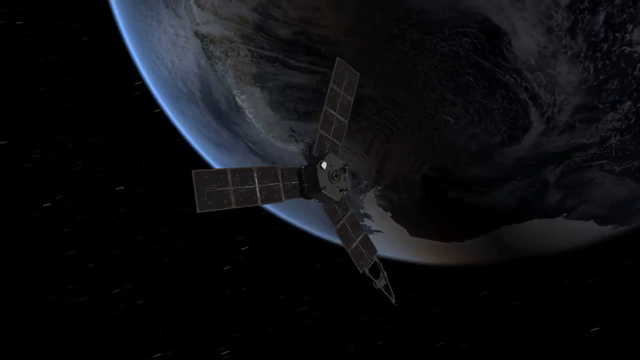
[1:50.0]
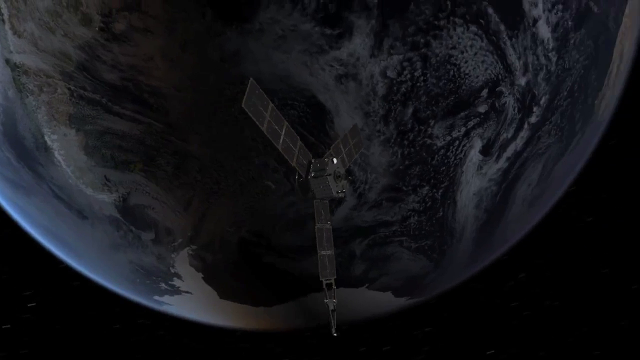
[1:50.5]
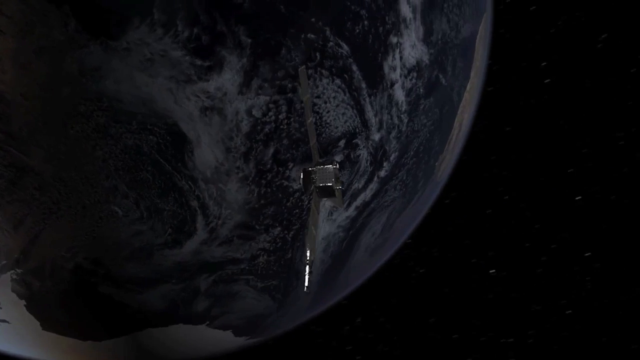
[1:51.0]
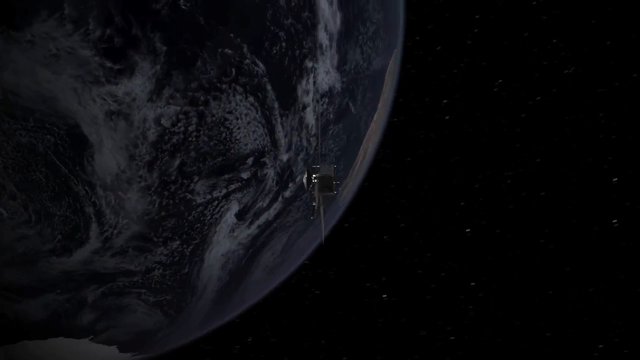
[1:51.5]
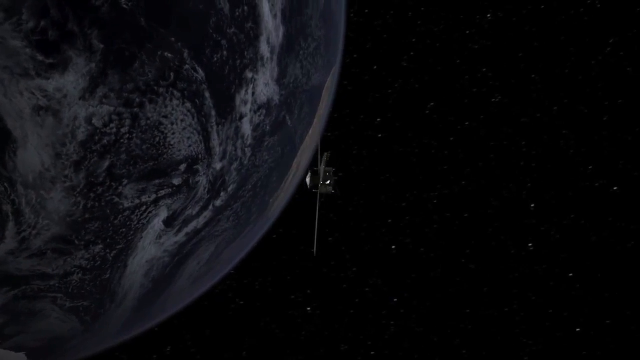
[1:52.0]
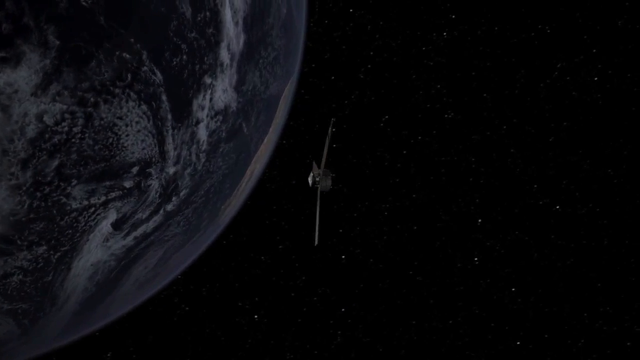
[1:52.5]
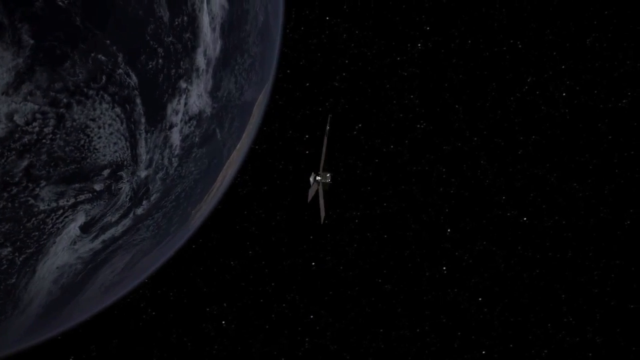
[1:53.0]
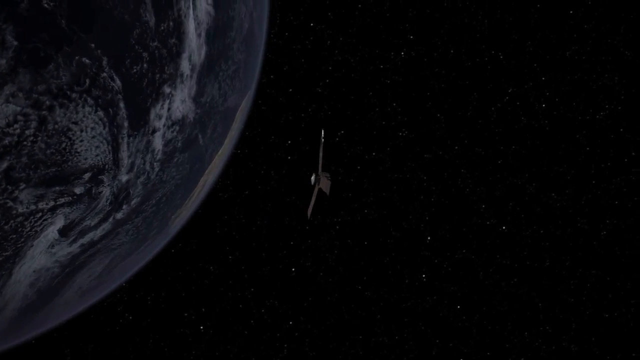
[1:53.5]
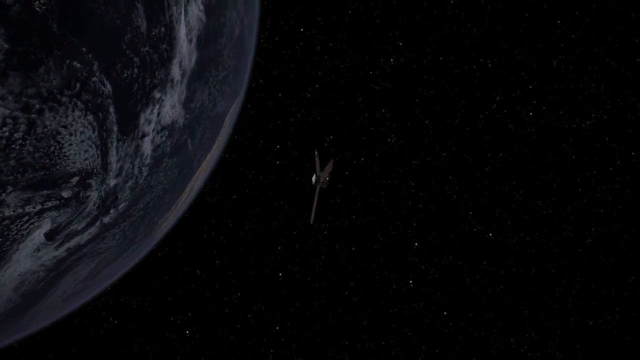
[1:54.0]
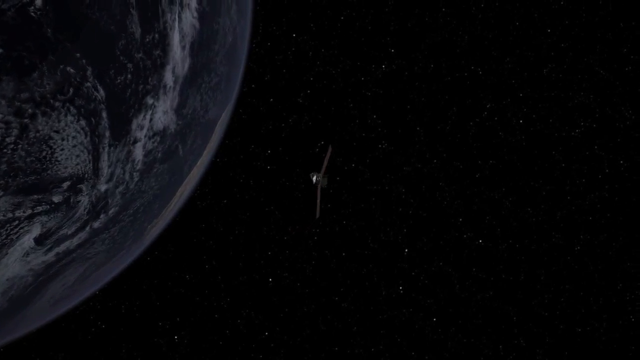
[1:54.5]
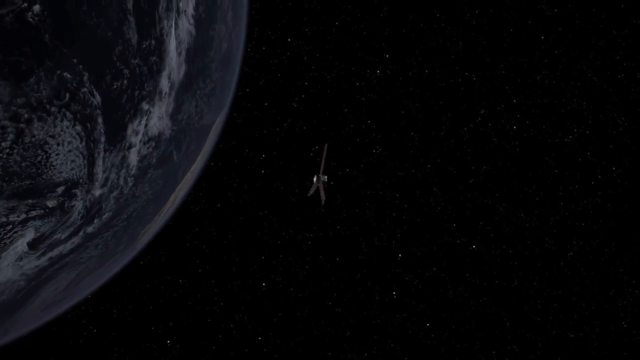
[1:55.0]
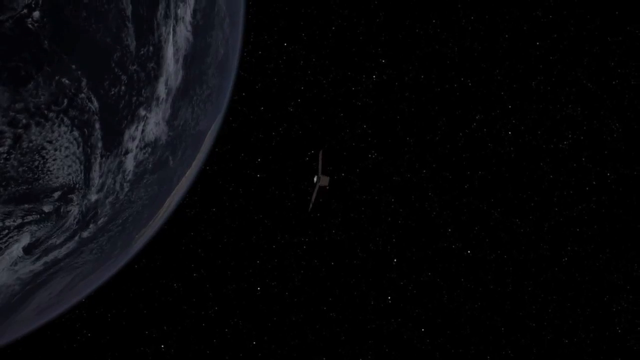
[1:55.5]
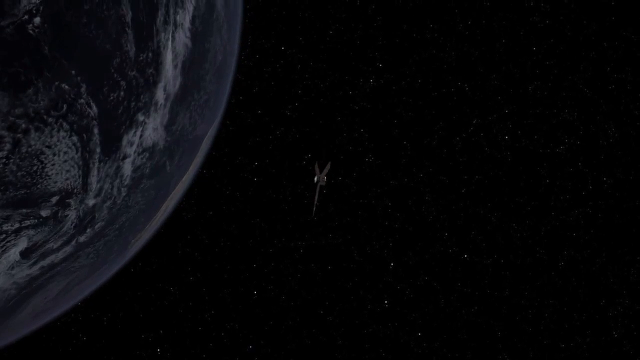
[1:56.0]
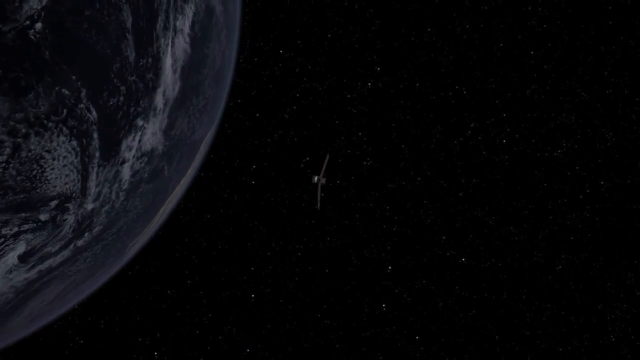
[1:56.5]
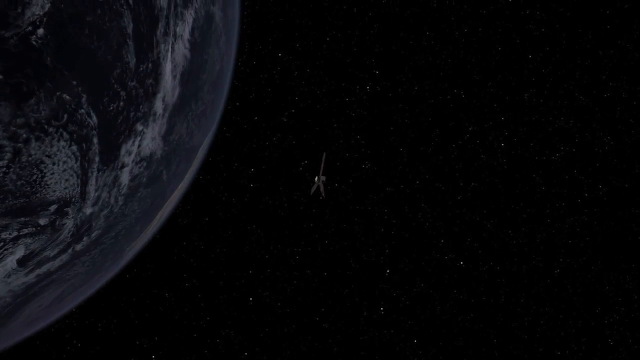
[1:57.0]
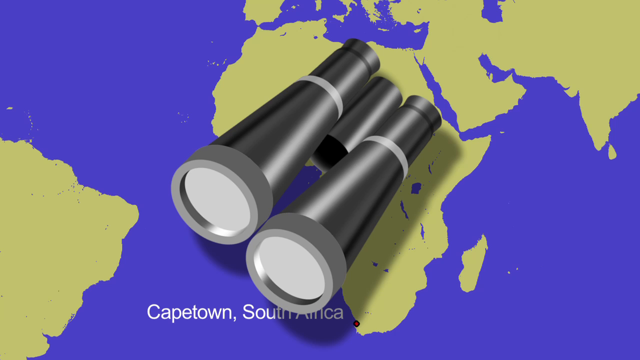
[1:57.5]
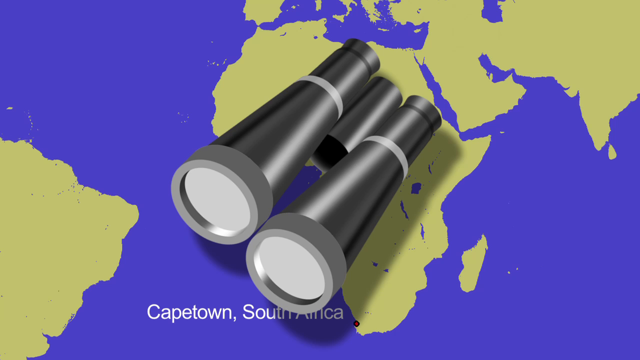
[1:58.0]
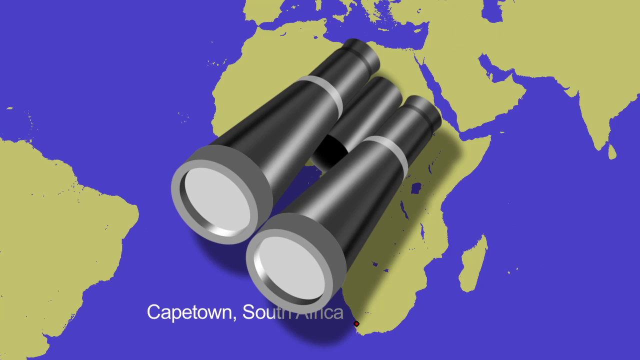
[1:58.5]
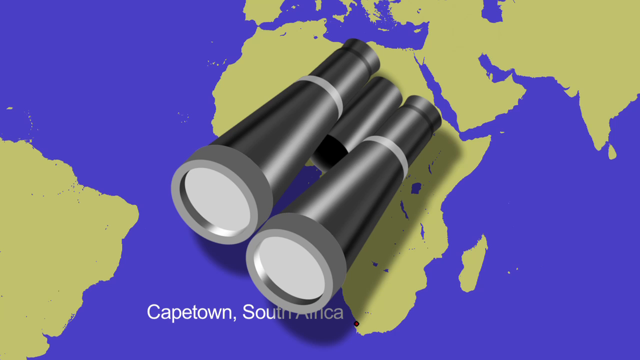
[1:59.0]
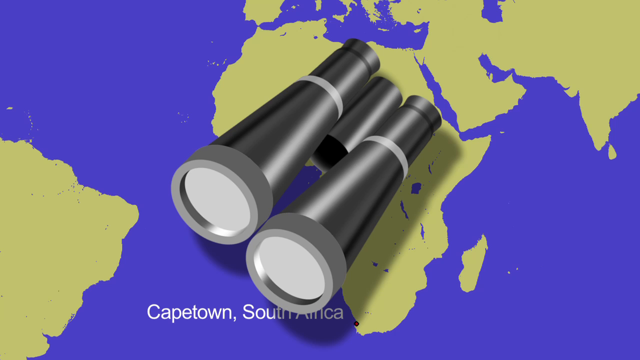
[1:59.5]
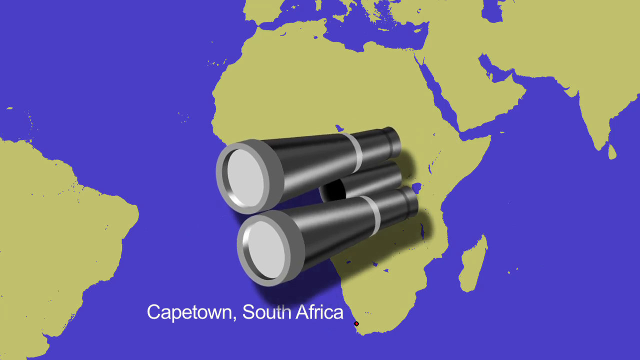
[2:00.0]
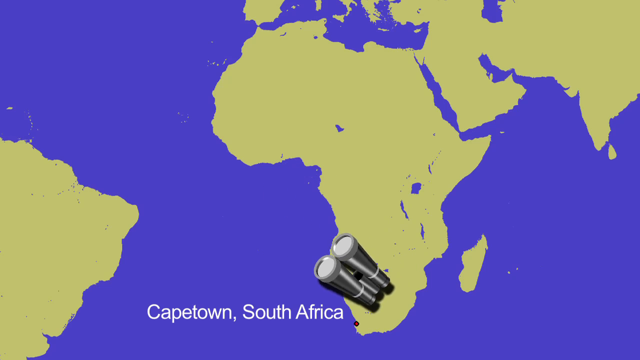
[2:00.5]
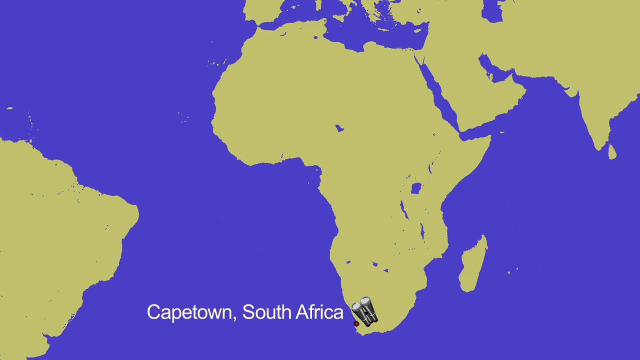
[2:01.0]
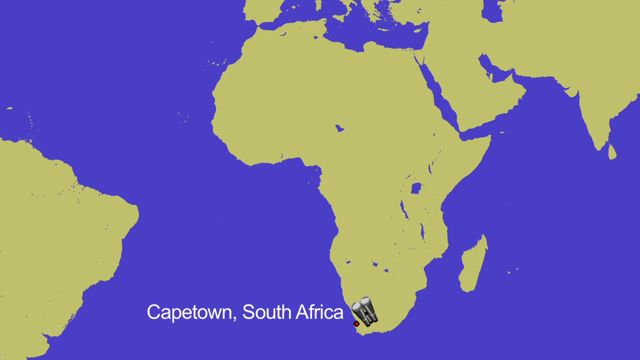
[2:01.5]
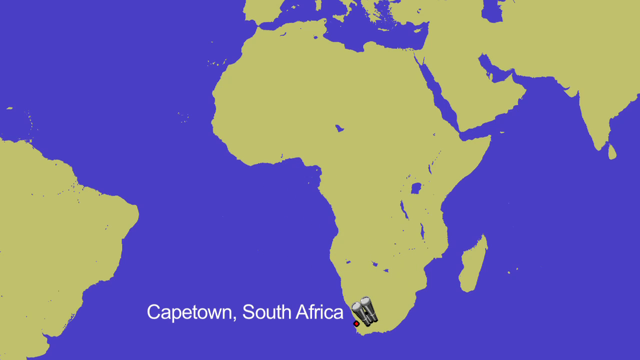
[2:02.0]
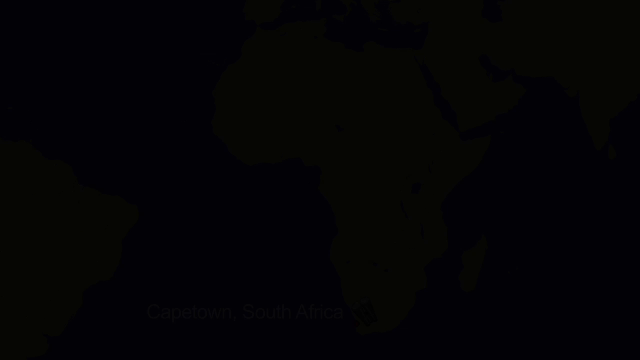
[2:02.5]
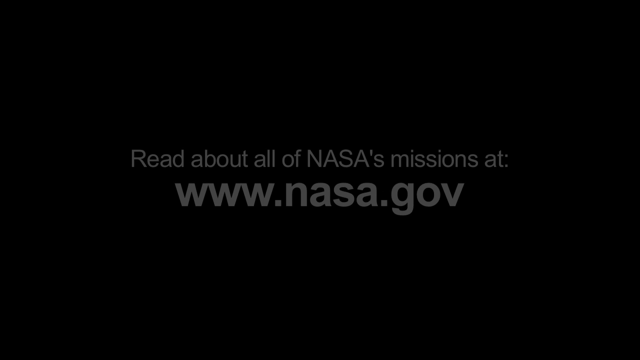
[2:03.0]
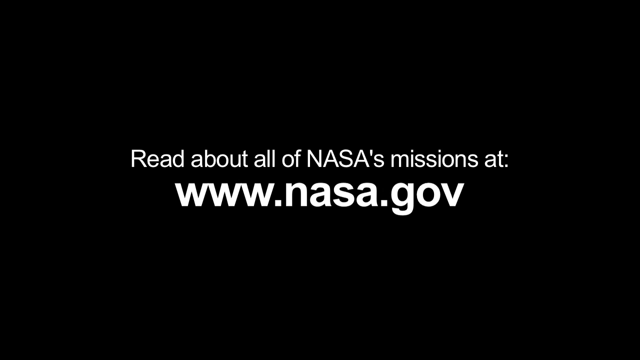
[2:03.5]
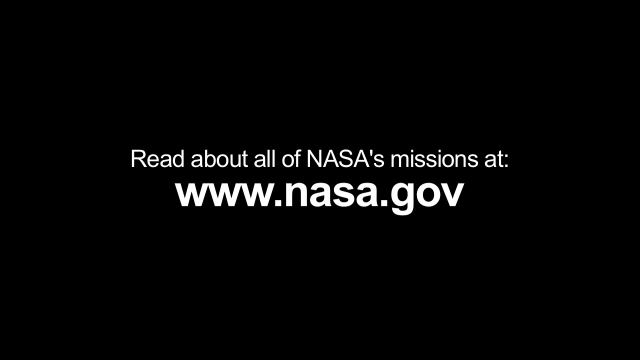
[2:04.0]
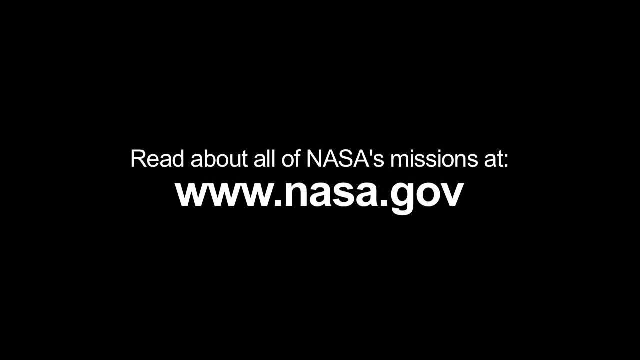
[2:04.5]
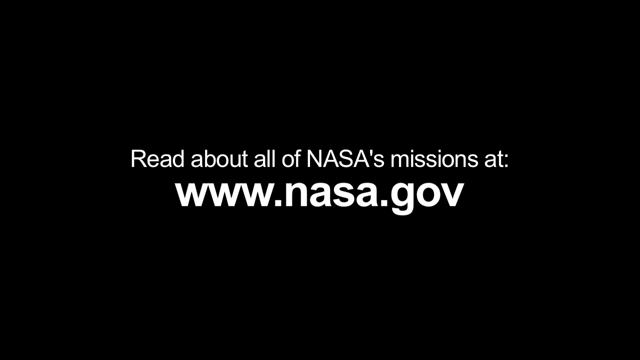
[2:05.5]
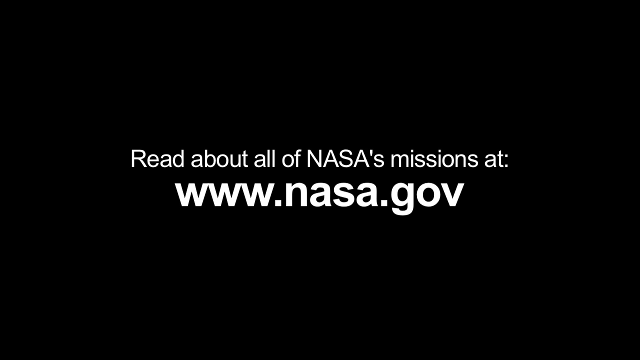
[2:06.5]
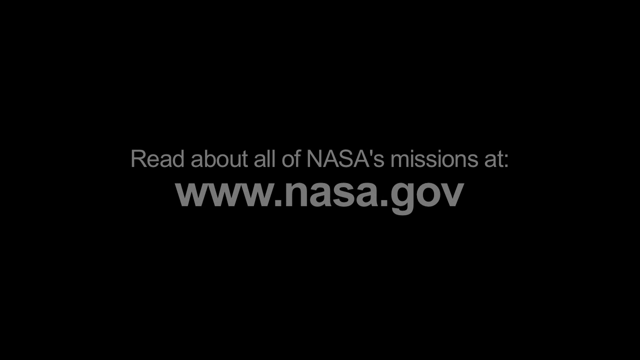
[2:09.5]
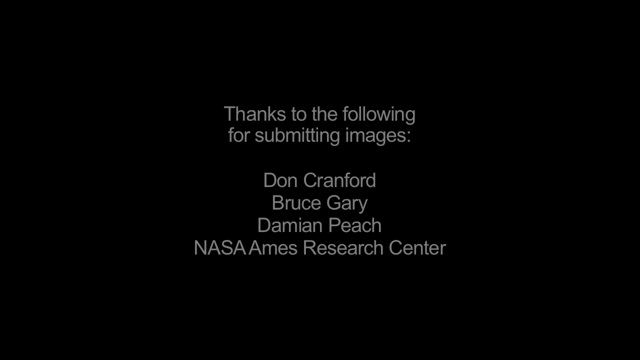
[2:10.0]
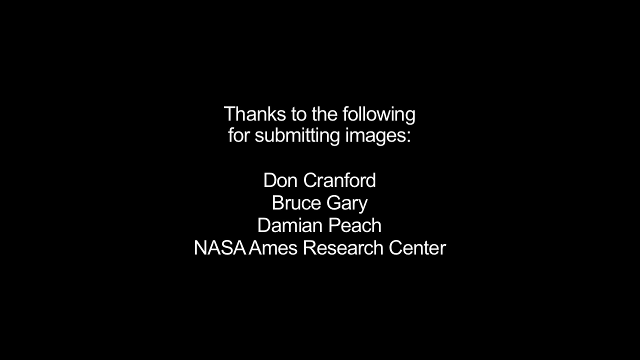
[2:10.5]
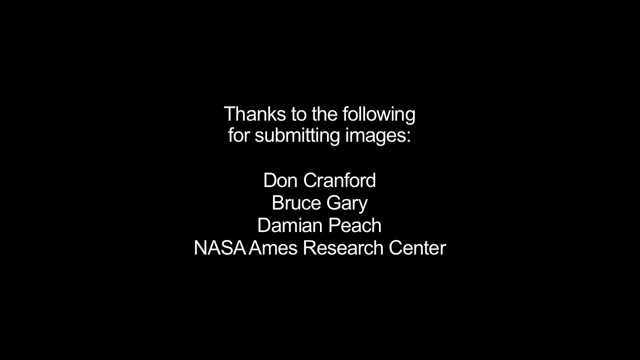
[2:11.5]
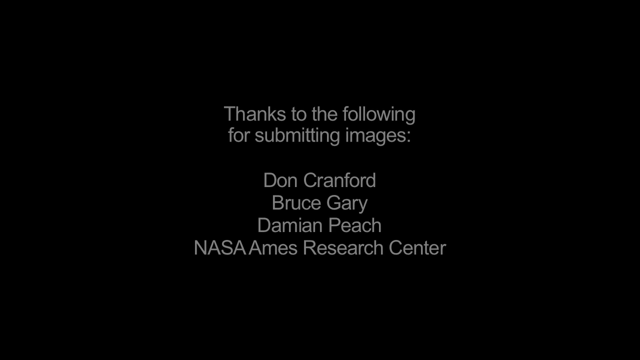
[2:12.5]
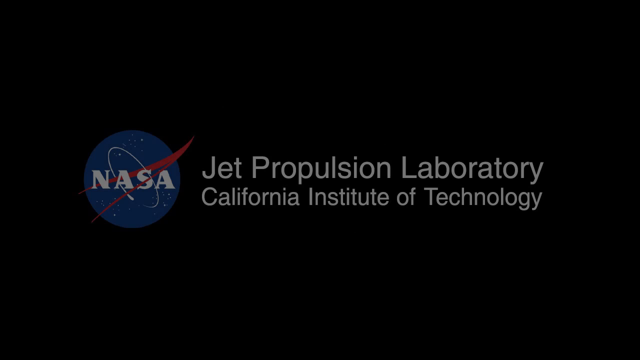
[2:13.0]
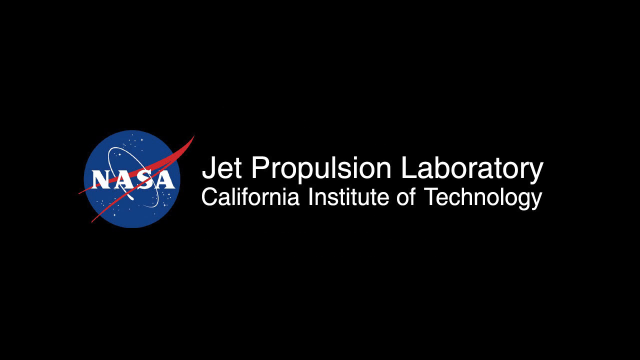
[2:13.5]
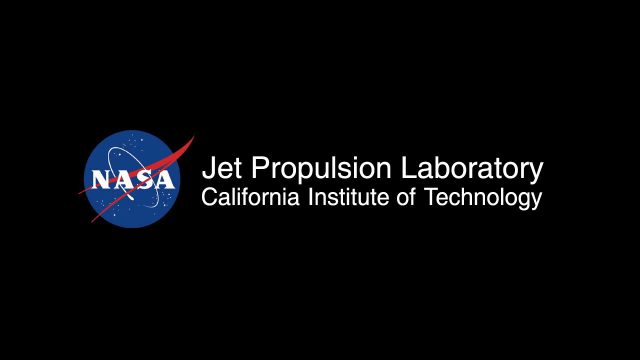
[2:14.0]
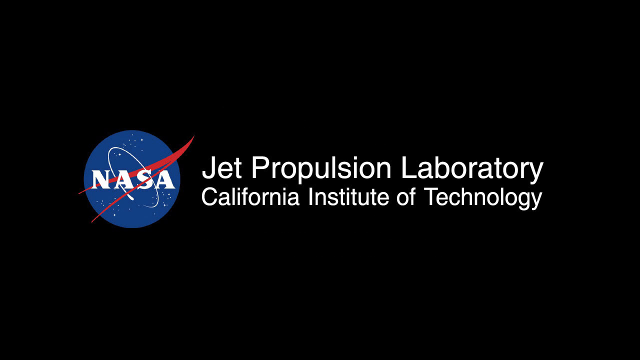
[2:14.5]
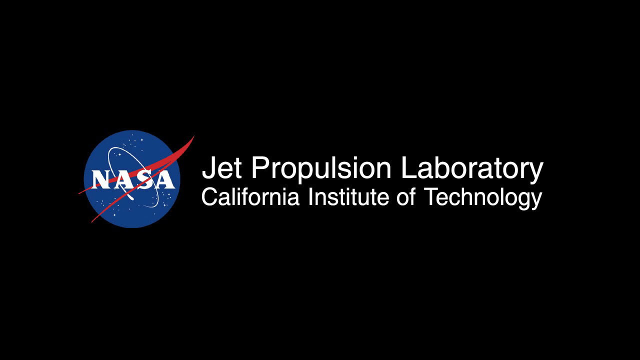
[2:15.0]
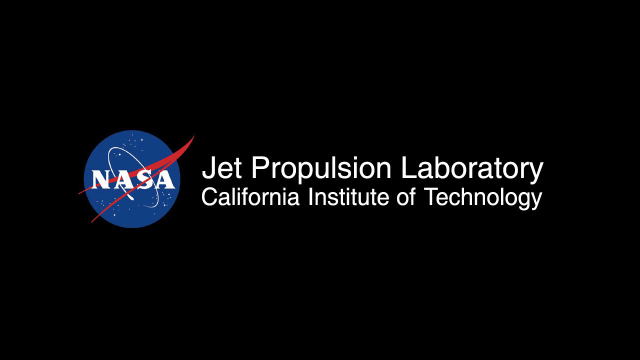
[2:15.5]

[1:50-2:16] A computer-generated flying thing is shown: two of its sides look the same, possibly photovoltaic panels, while the other side is somewhat pointy, and there is a fake planet Earth. The thing flies through the sky almost like a propeller. Then "Cape Town, South Africa" appears with a pair of binoculars on top of a computer-generated map of Africa; the binoculars shrink and fade down to South Africa, and nothing else happens. Finally, white letters on a black background read "read all about NASA's missions at www.nasa.gov".